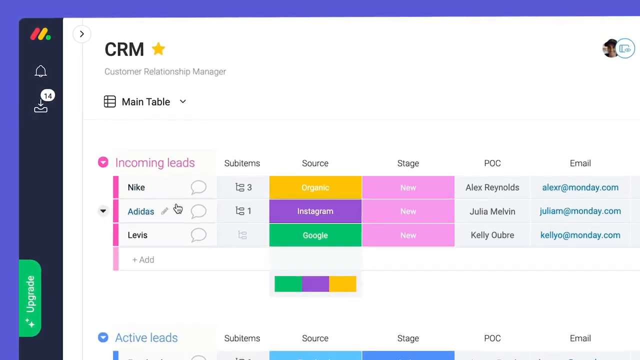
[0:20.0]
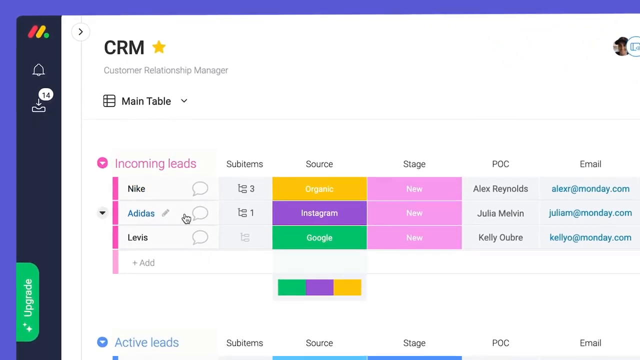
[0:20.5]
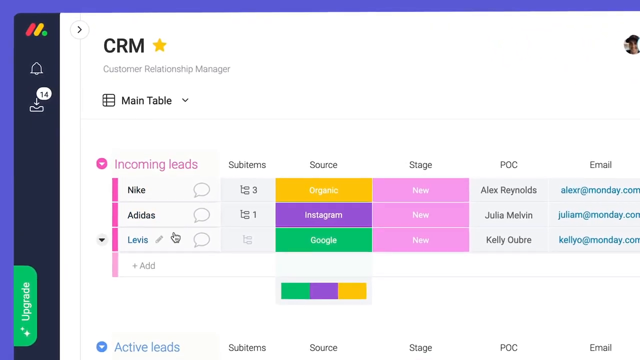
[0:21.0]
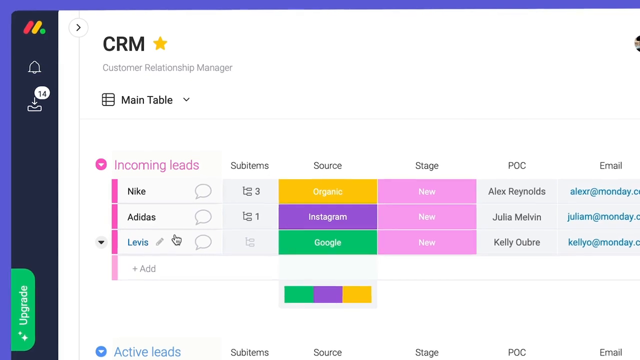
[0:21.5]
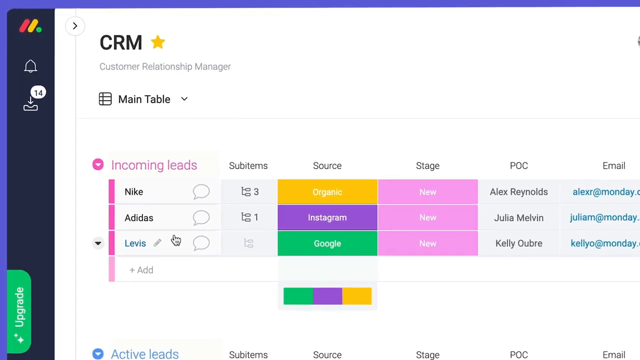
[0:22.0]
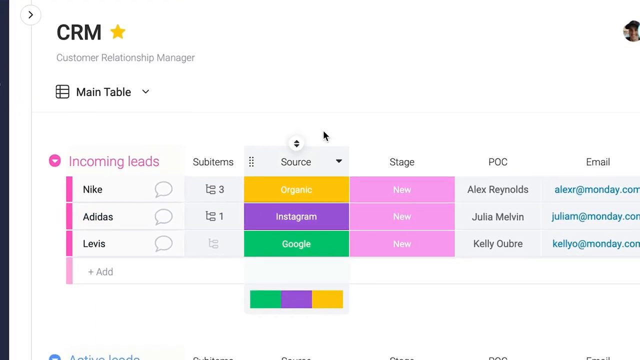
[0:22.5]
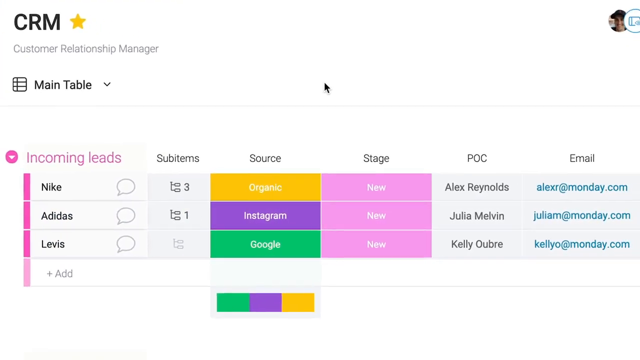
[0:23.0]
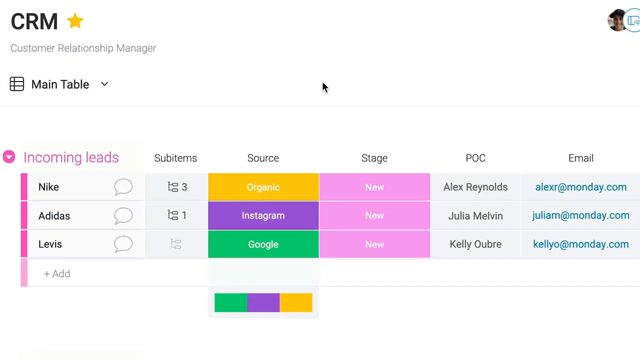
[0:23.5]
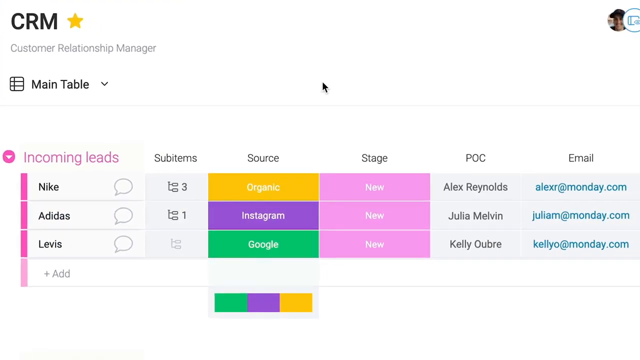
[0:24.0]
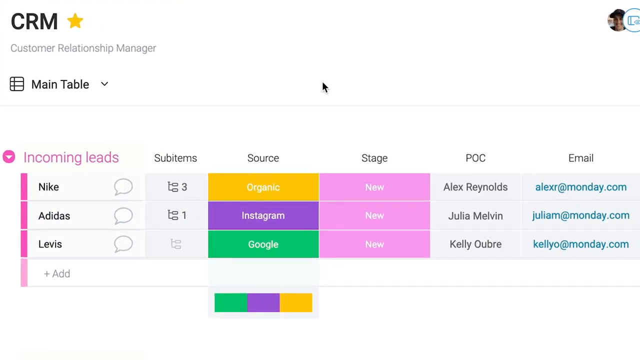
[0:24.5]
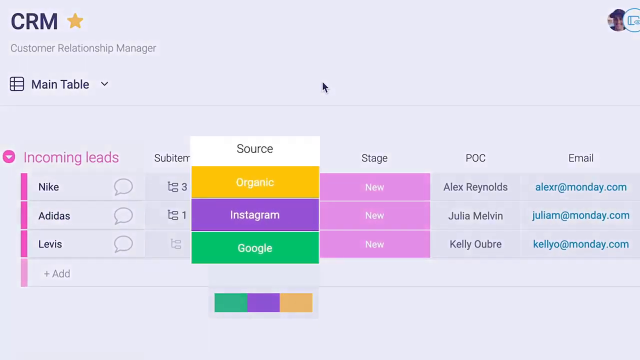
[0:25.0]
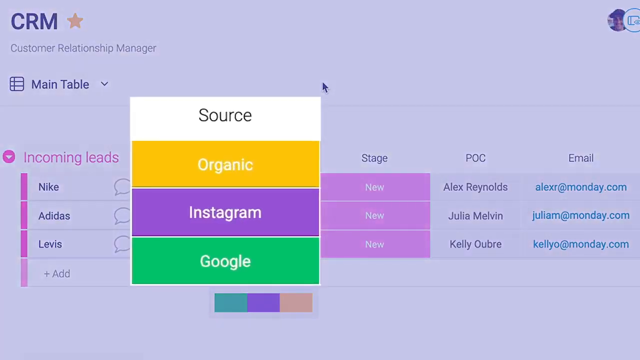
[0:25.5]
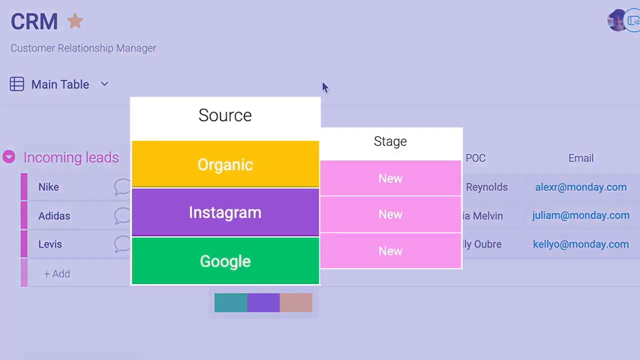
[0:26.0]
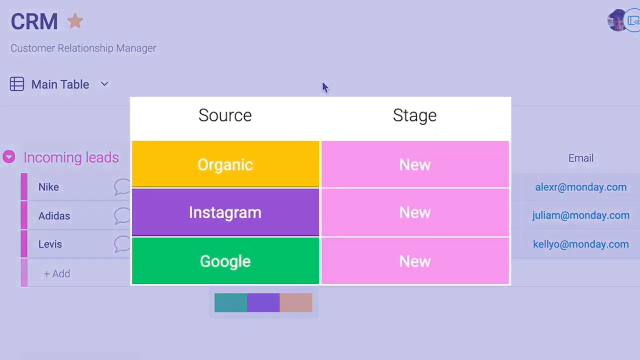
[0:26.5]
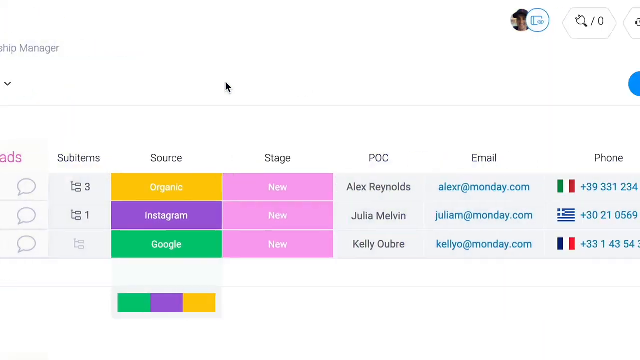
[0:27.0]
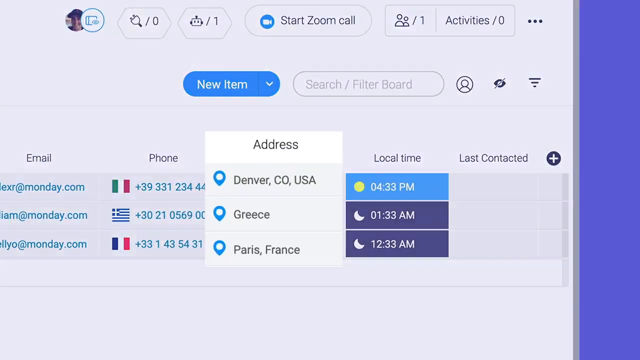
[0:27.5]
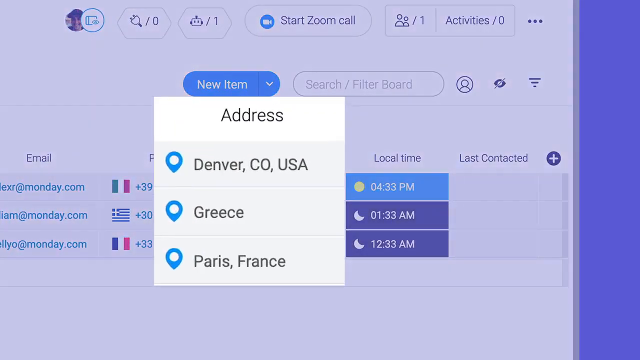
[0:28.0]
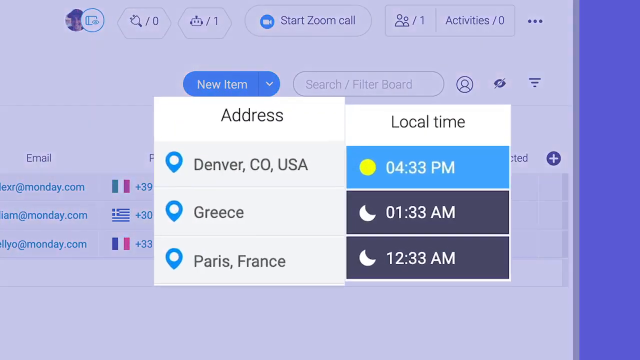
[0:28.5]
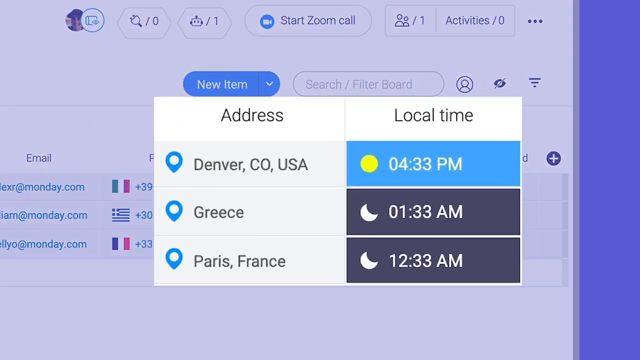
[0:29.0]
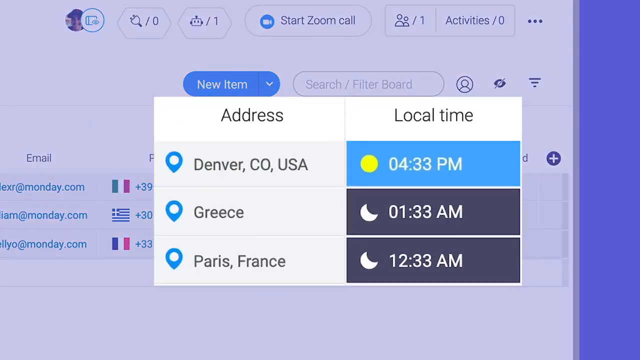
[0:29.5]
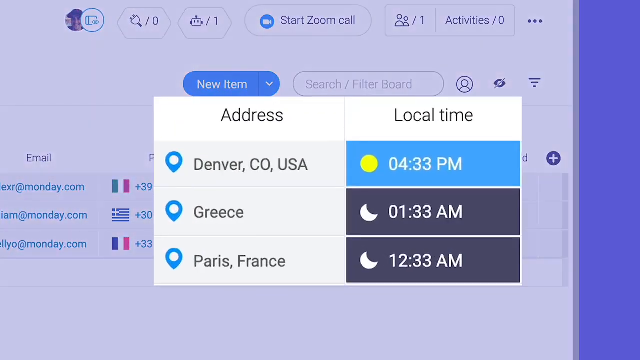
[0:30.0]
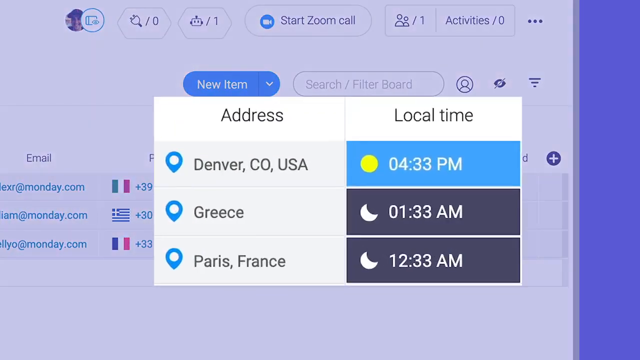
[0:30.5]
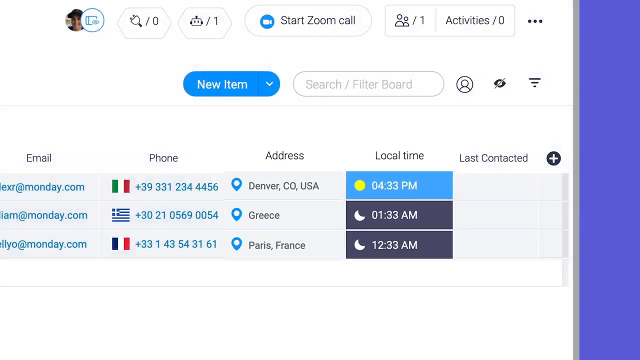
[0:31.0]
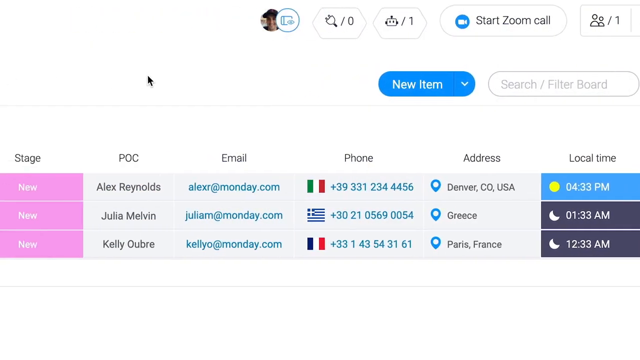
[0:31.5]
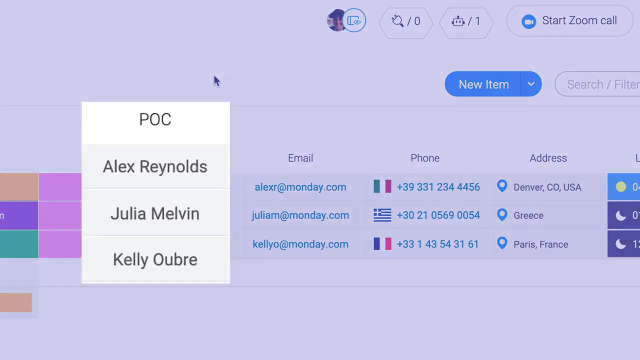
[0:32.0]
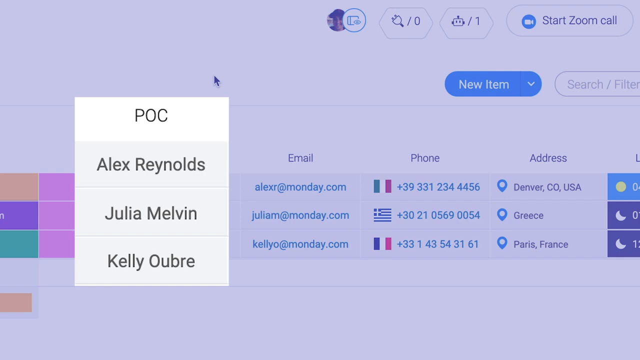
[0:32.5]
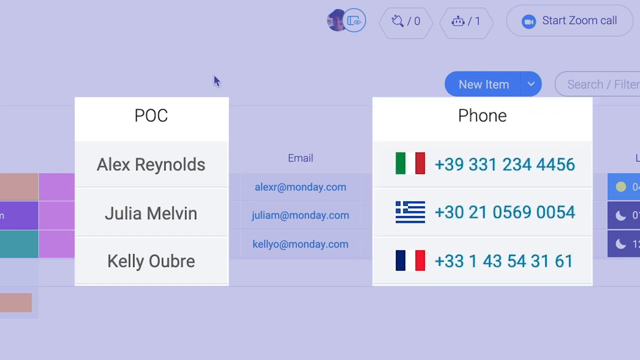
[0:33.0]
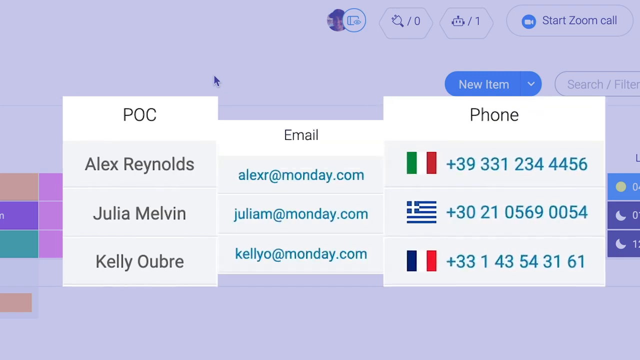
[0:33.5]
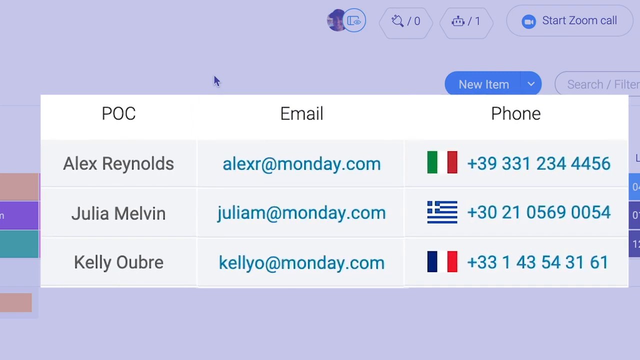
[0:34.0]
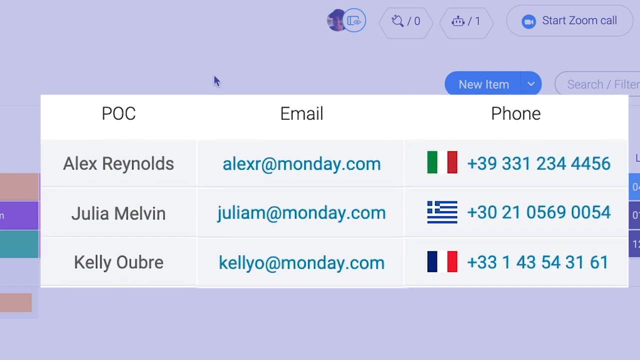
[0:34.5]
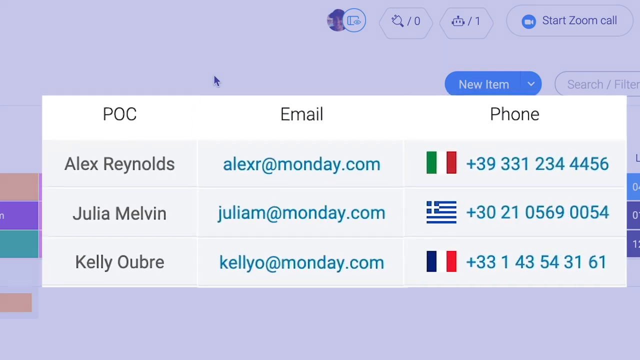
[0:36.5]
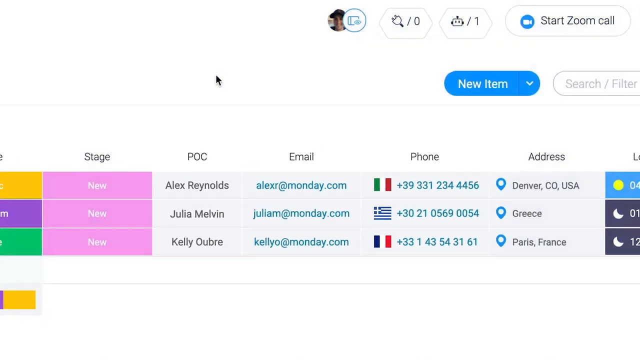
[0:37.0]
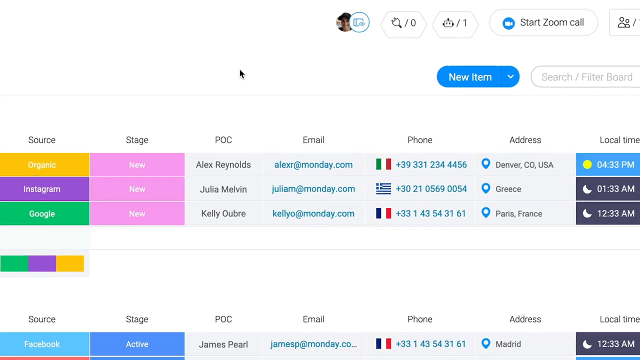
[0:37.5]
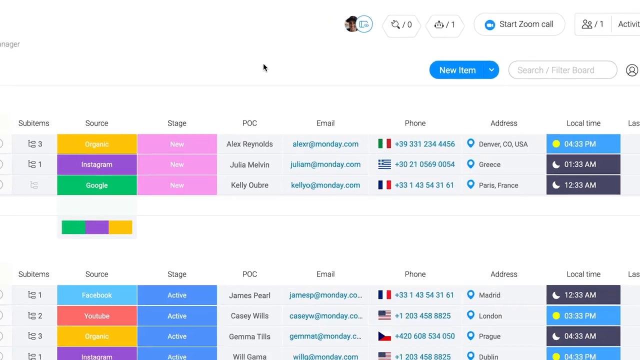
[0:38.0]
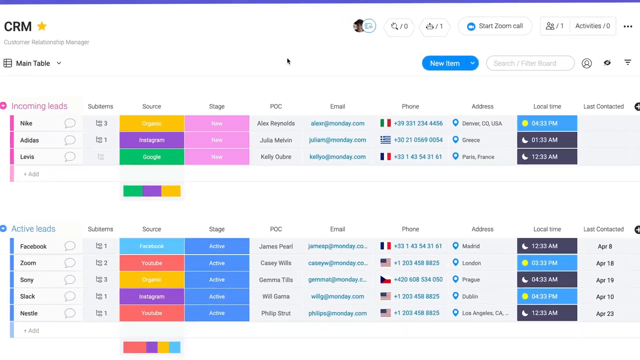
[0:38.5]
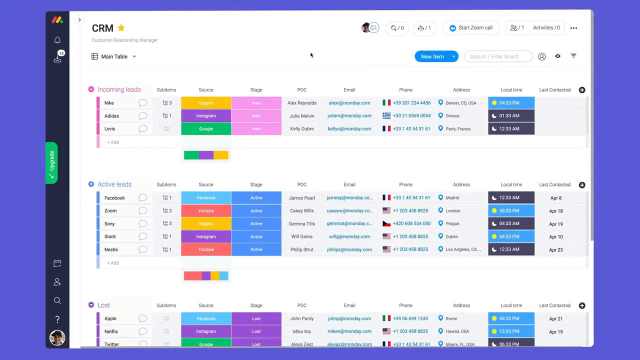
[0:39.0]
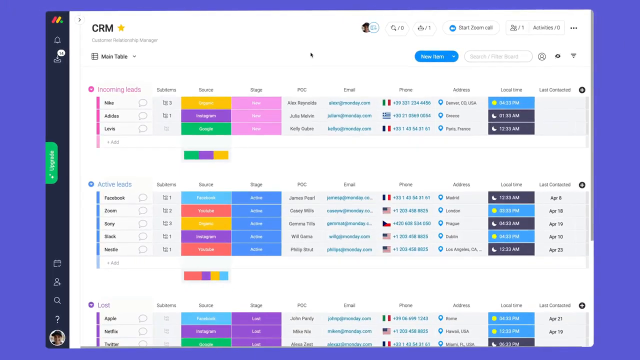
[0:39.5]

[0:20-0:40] The view zooms in on the Customer Relationship Manager page, on the main table. A graph shows incoming leads: Nike, Adidas, and Levi's, followed by an Add button. There are columns for sub items, source, stage, POC, and e-mail. The cursor moves and pulls up two boxes, source and then stage. Source, on the left, lists organic, Instagram, and Google; stage, on the right, reads new, new, new, all in pink. The cursor moves to the right side of the screen, and a pop-up box shows address and local time: Denver, Colorado, USA at 4:33 PM, Greece at 1:33 AM, and Paris, France at 12:33 AM. The view scrolls over to phone numbers, emails, and POC, then slowly pans away from the computer screen.